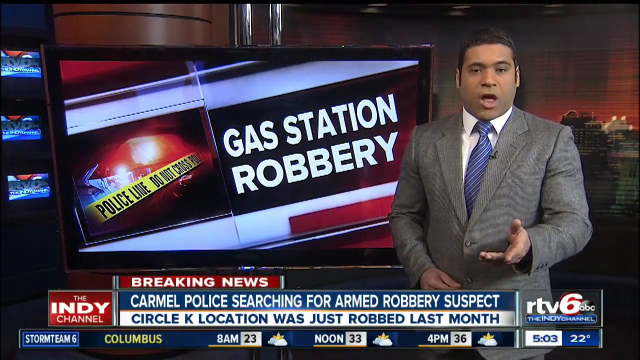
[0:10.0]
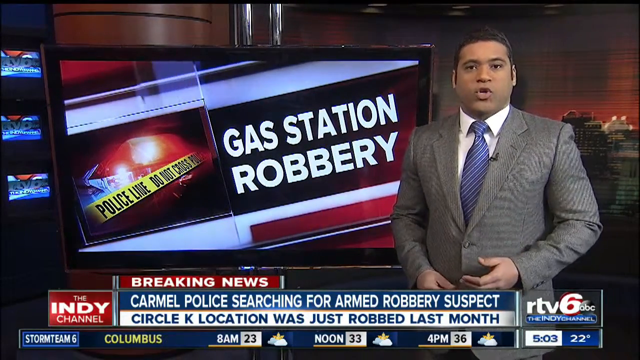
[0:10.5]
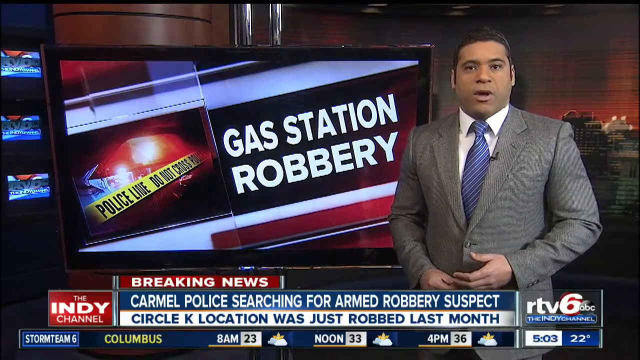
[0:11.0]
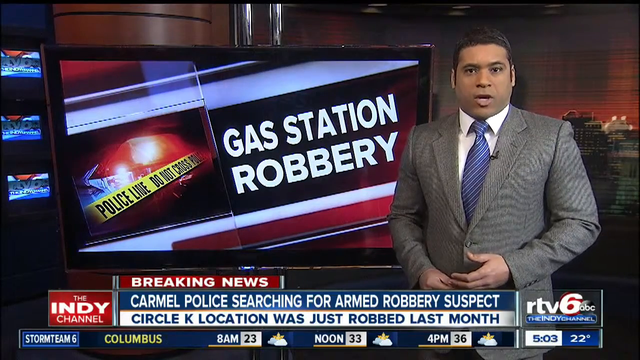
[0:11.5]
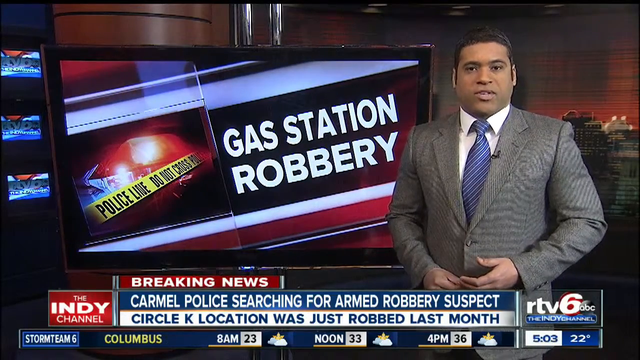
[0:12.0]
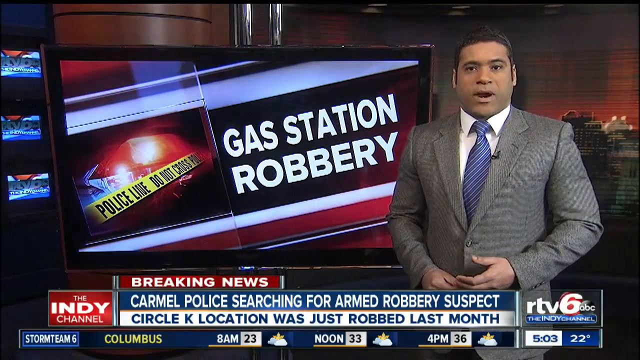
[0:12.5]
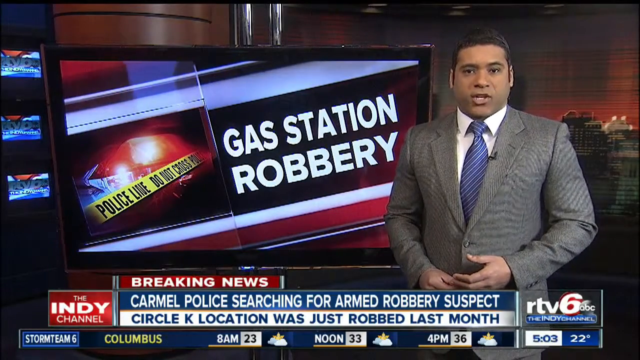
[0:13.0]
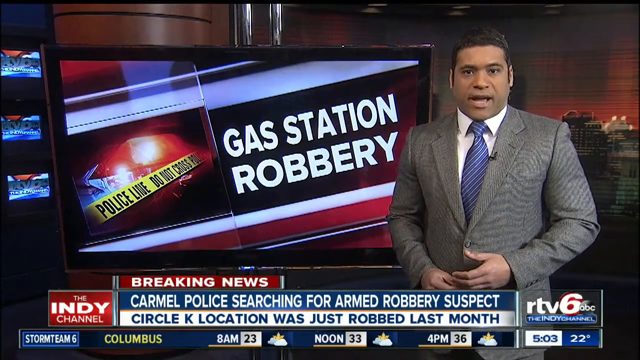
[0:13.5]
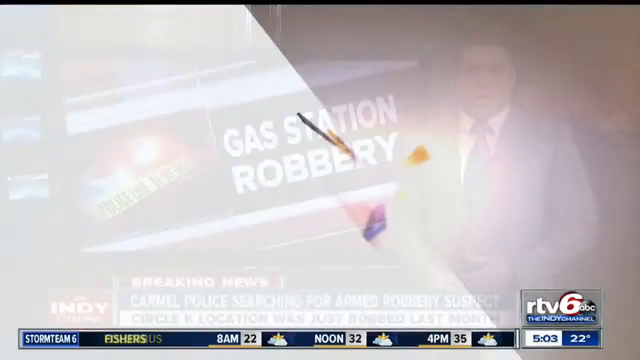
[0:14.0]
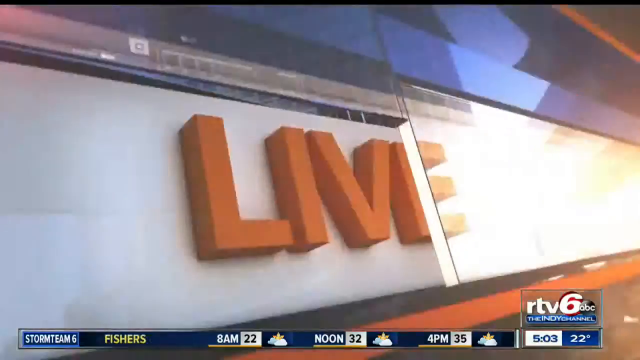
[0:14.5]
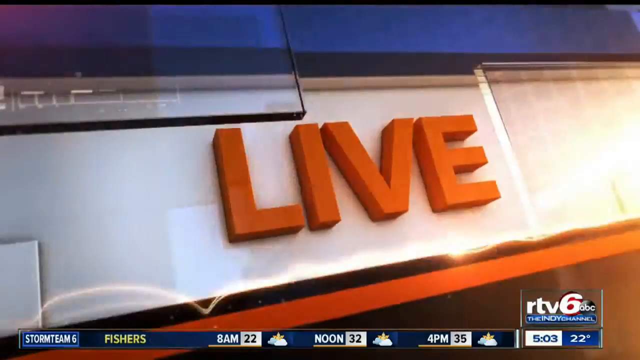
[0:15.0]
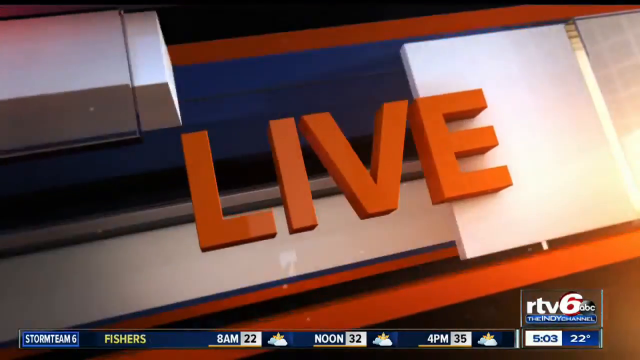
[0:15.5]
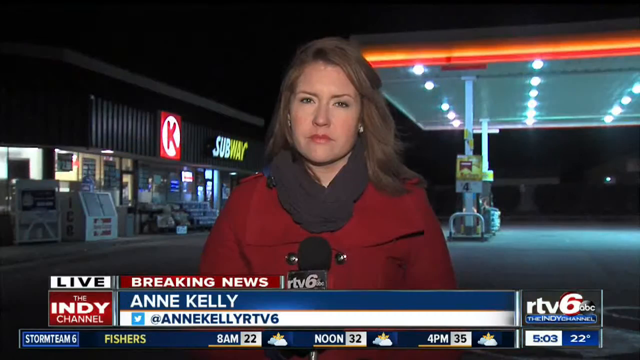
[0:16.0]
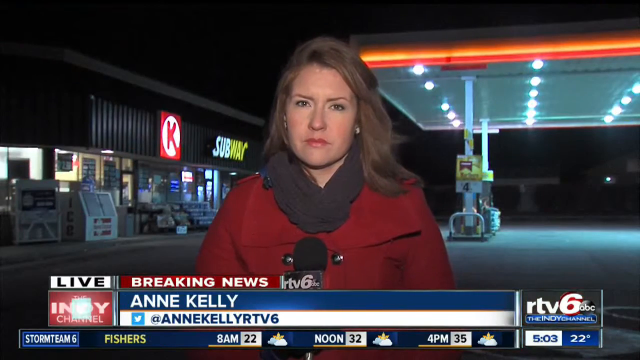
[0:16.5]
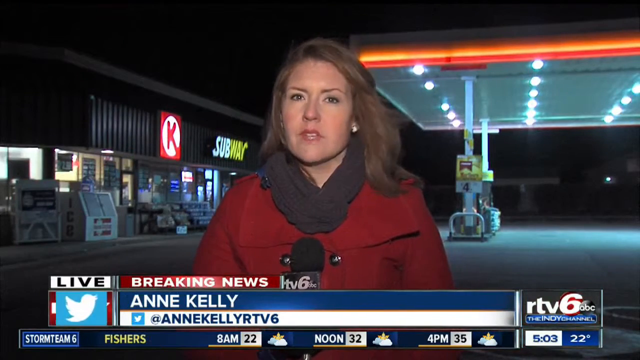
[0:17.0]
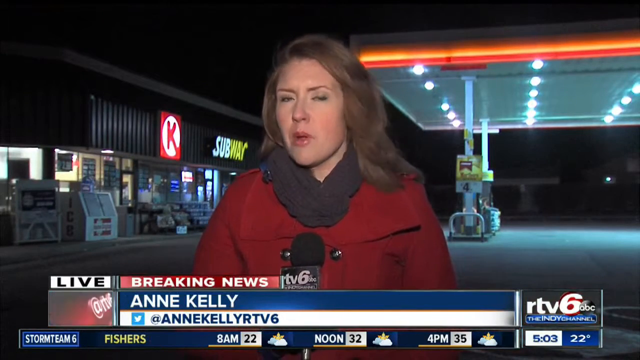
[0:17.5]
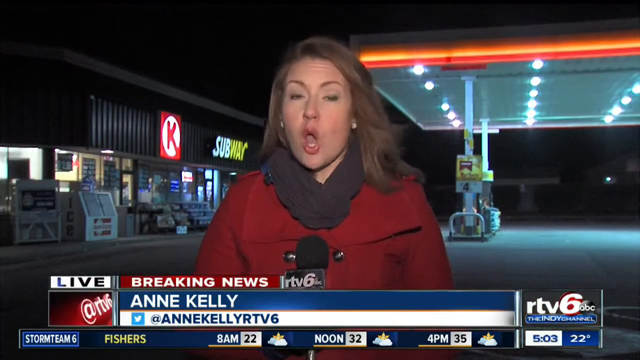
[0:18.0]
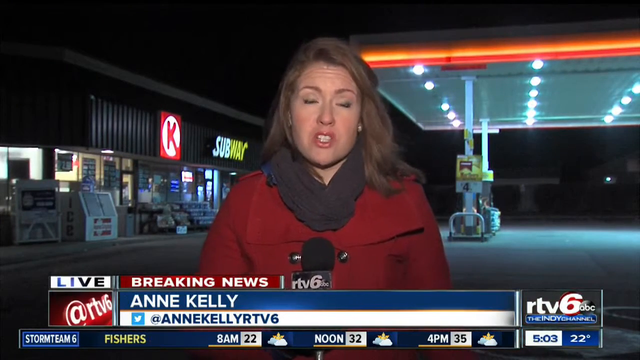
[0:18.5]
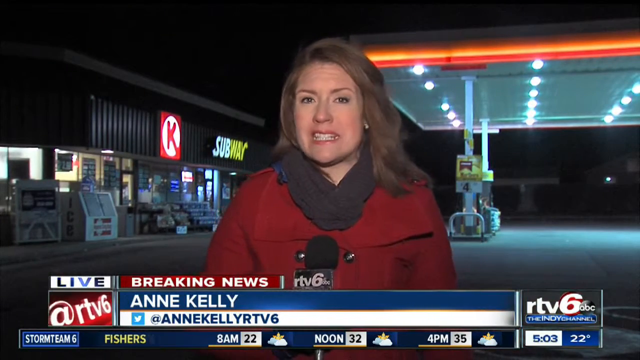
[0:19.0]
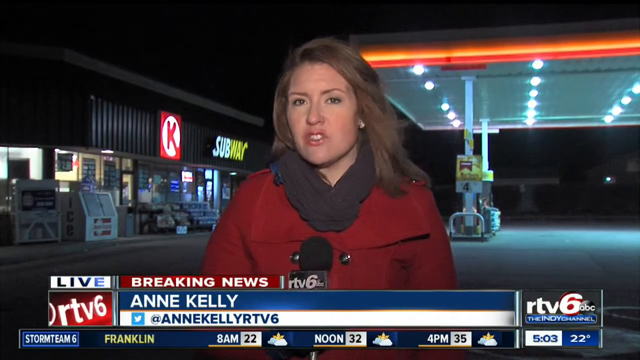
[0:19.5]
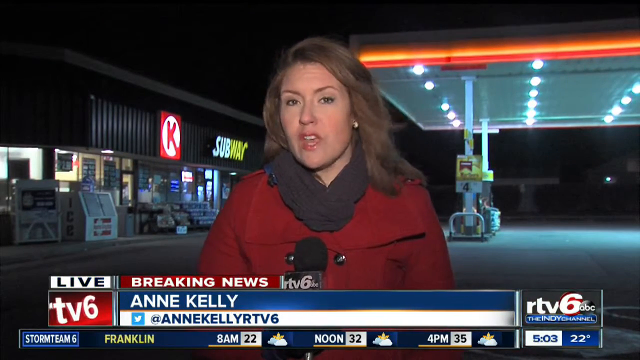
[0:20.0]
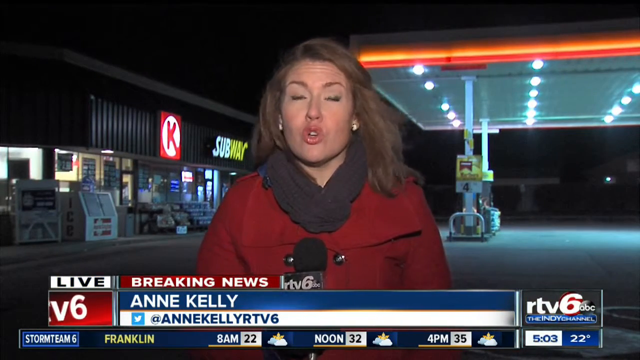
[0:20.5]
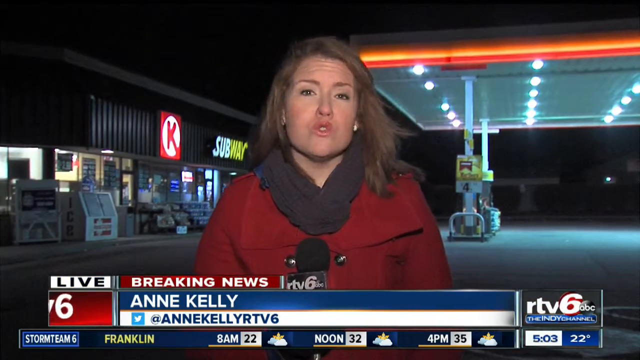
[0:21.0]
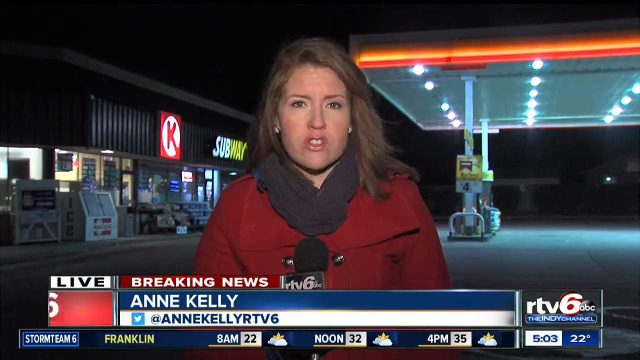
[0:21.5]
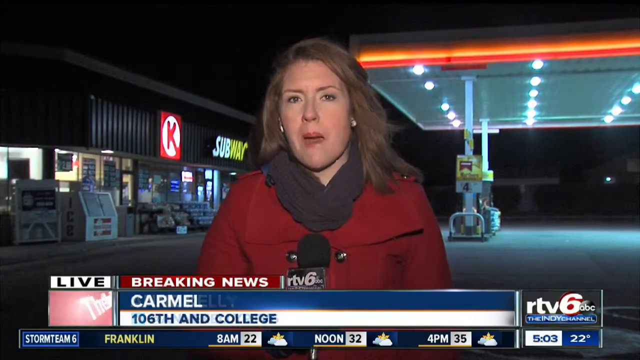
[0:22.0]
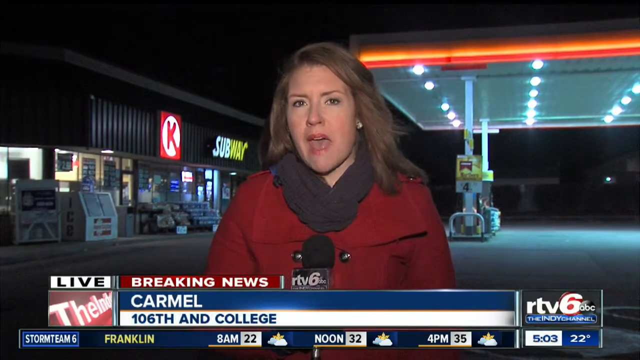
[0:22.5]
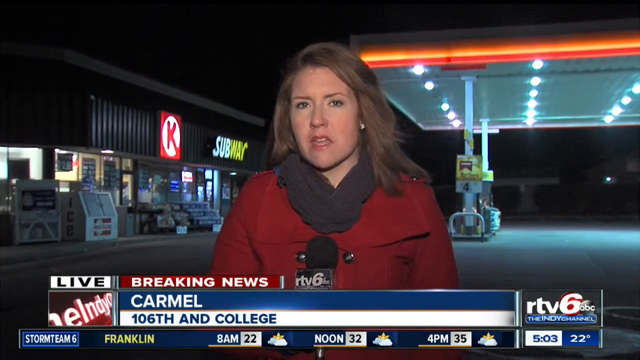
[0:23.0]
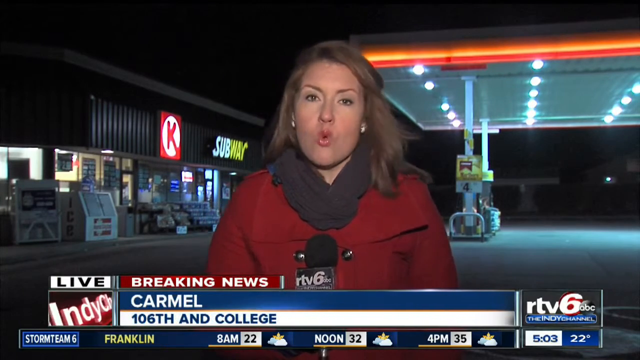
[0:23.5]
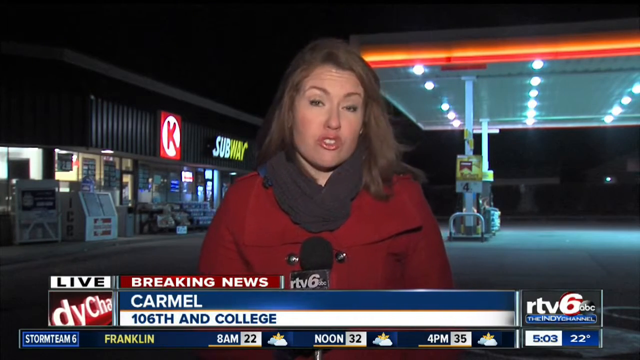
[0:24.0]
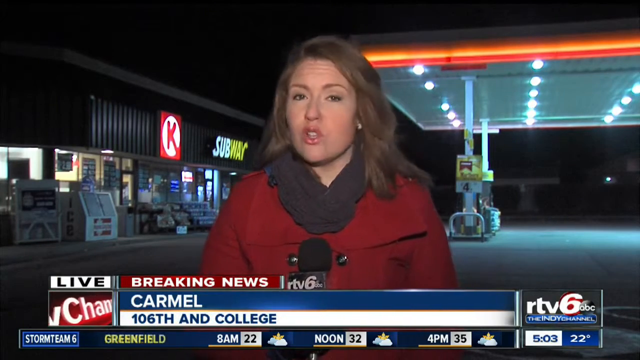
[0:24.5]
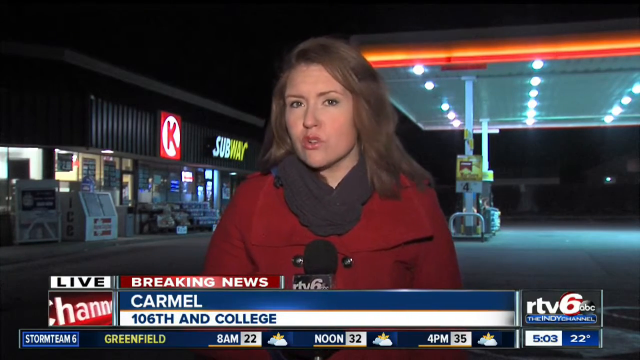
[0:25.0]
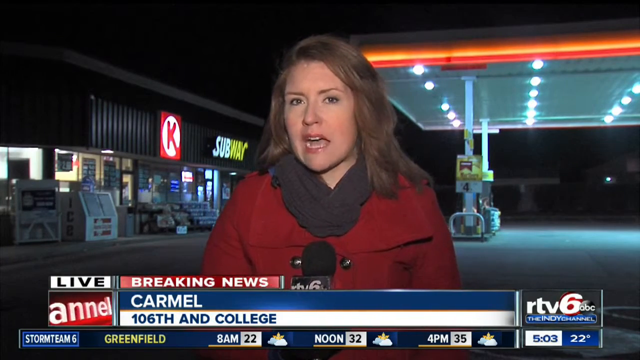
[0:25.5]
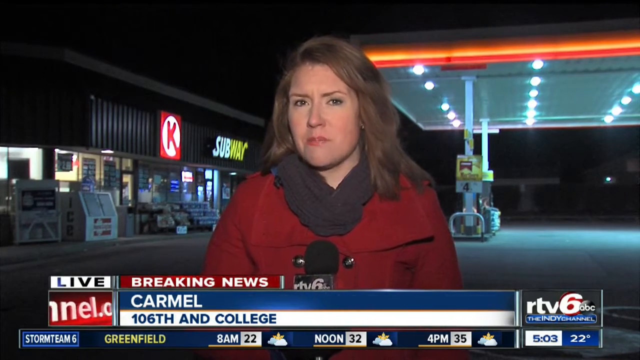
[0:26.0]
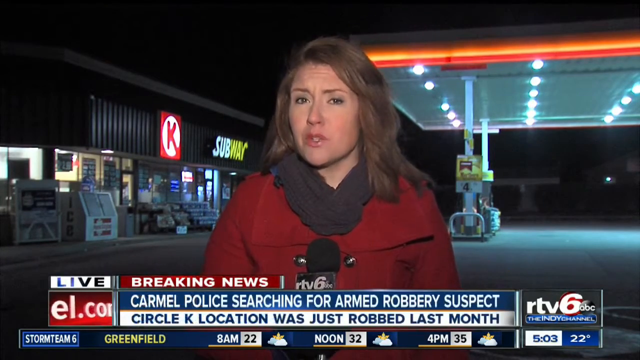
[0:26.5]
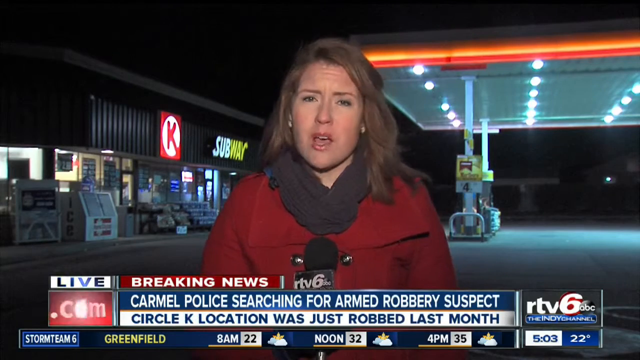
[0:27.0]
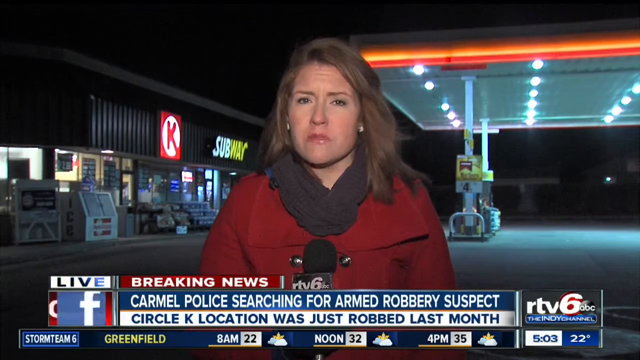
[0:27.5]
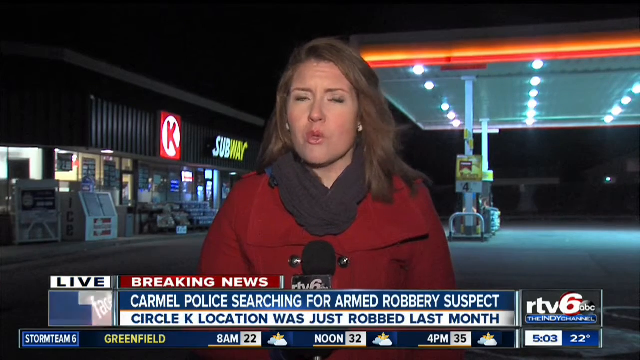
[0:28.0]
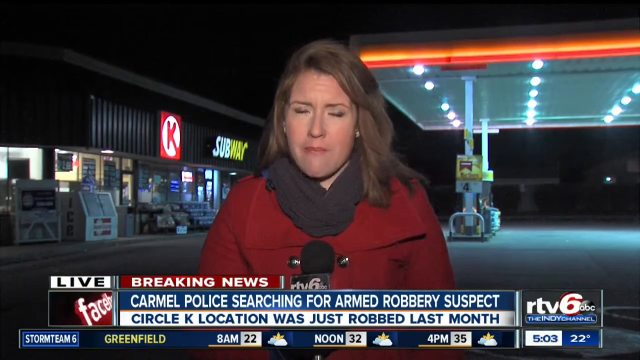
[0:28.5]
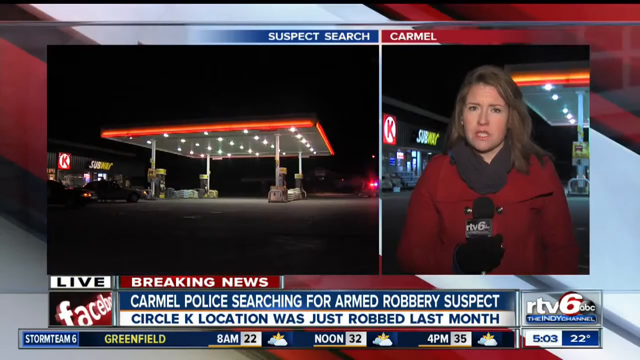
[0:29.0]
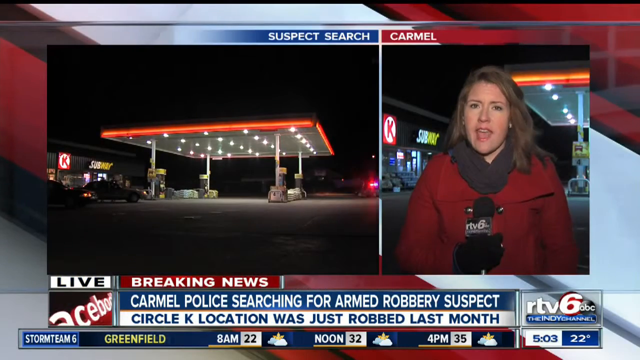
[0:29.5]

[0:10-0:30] The male news reporter is on the right side of the screen, holding his left hand up with the palm sort of facing the top of the screen and fingers extended. Behind him, in the center of the screen, is a TV that reads "gas station robbery." He is talking, moving his lips, and brings his hand back down. The view changes to a screen that says "live" in orange letters, then to a female news reporter in a red coat and a dark gray scarf standing out in front of a gas station. The pumps are visible on the right side of the screen, which is her left. She is talking, with a microphone up in front of her chest. On the left side of the screen is a Circle K, and to the right of the Circle K is the word "Subway."